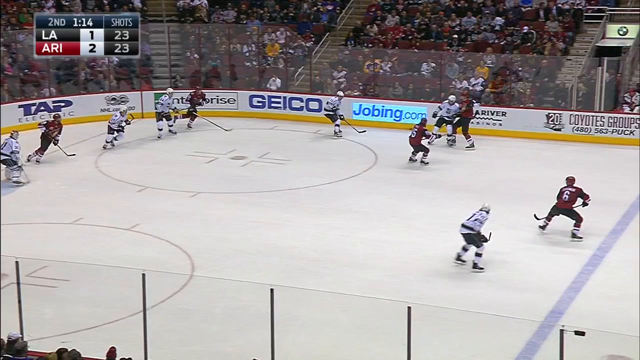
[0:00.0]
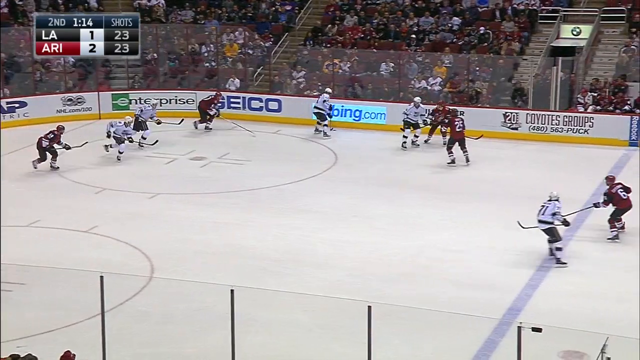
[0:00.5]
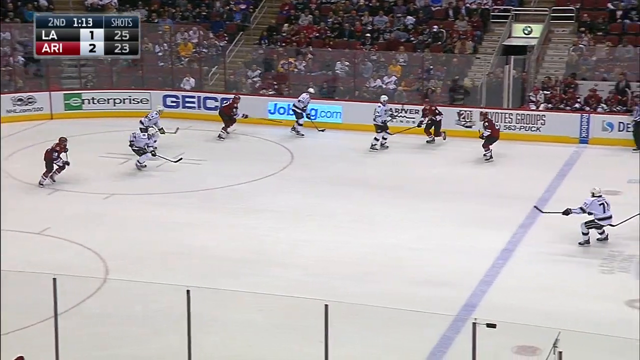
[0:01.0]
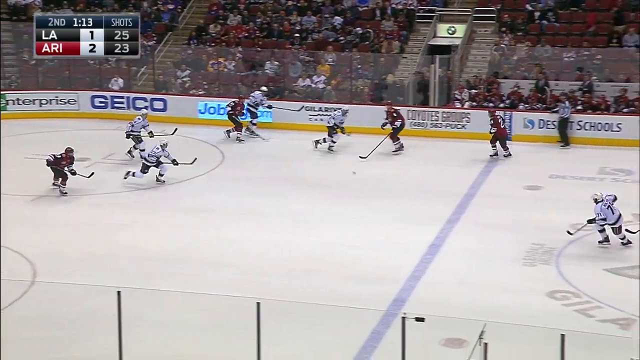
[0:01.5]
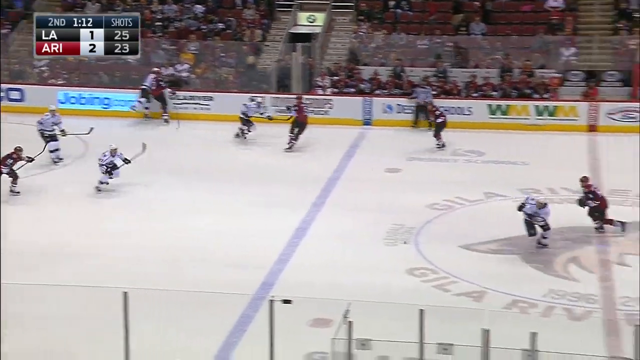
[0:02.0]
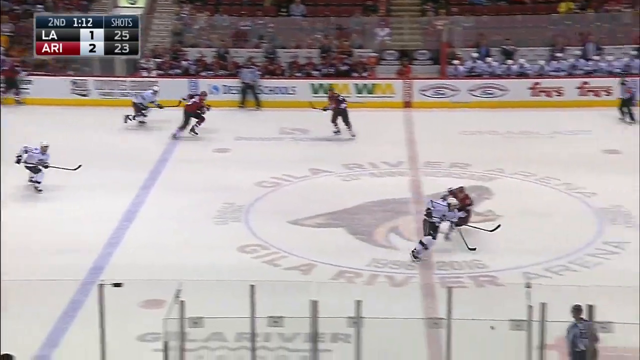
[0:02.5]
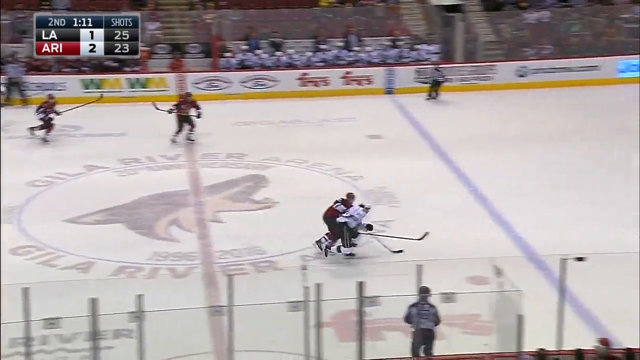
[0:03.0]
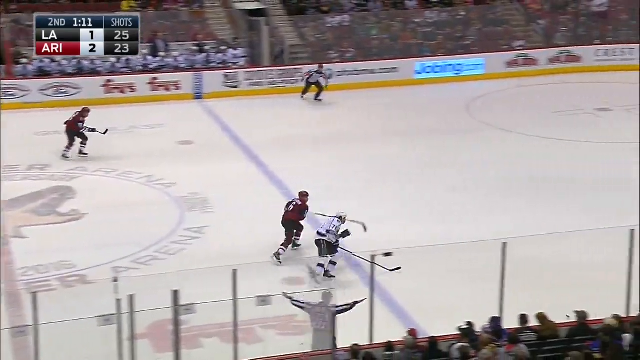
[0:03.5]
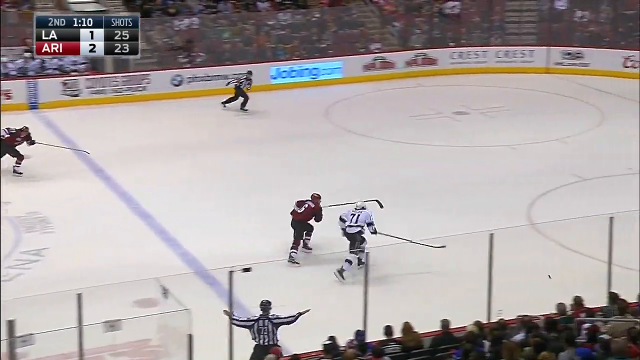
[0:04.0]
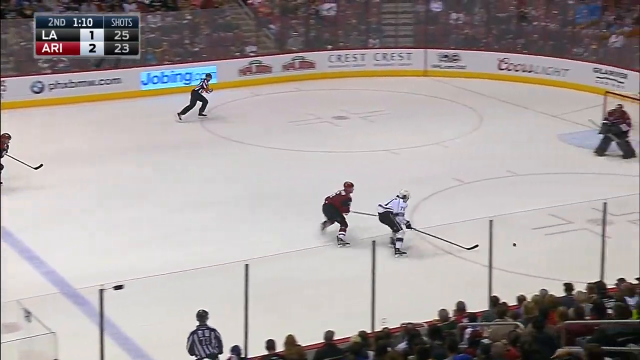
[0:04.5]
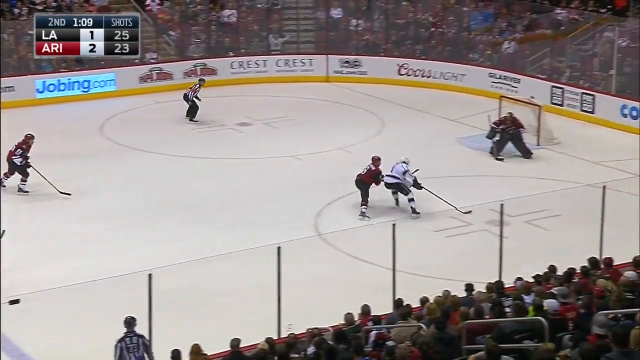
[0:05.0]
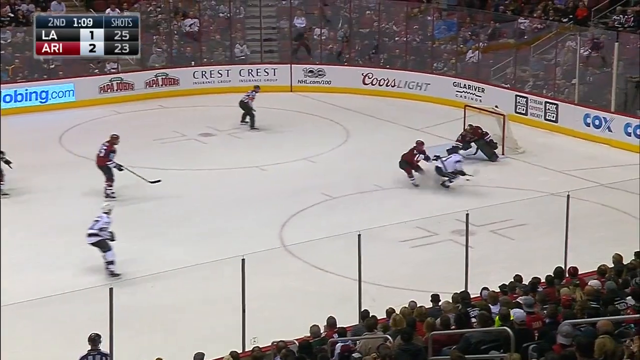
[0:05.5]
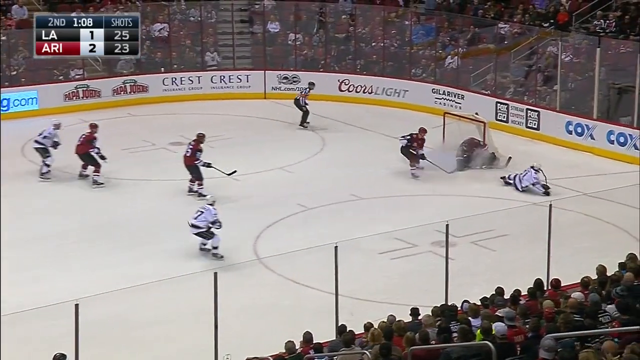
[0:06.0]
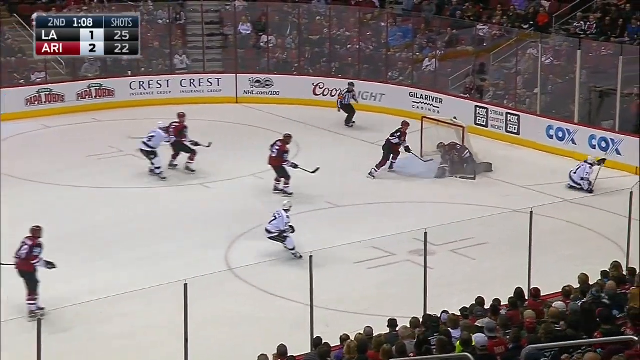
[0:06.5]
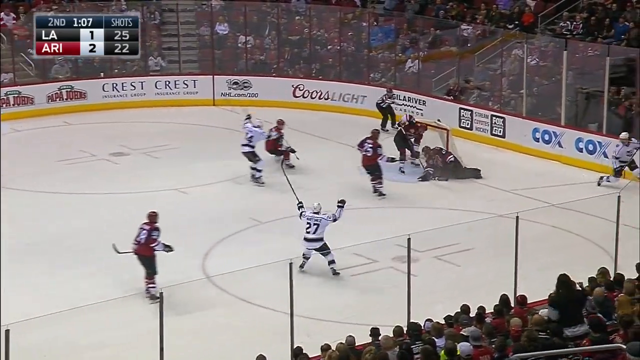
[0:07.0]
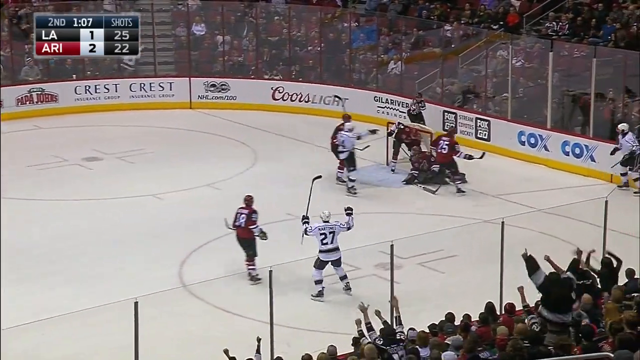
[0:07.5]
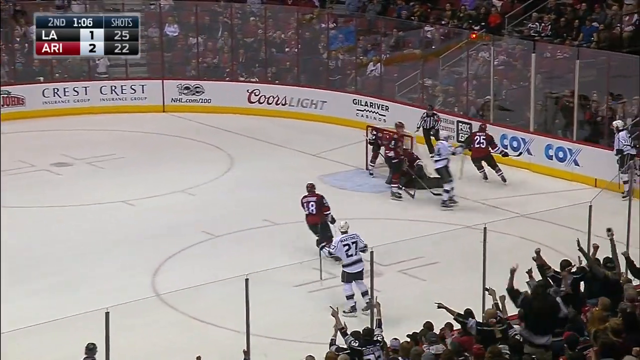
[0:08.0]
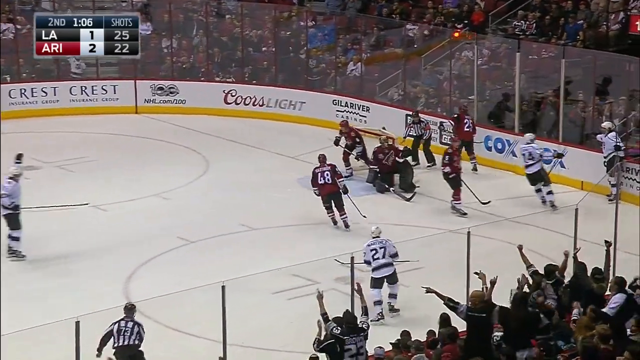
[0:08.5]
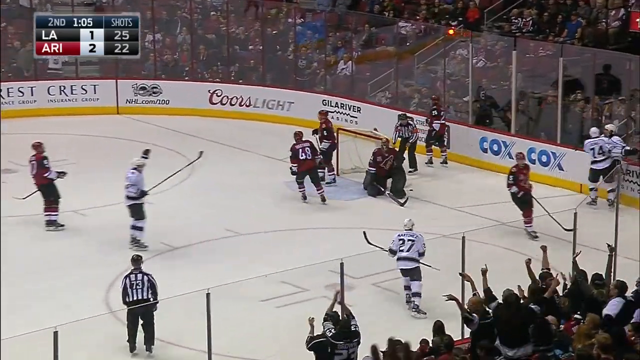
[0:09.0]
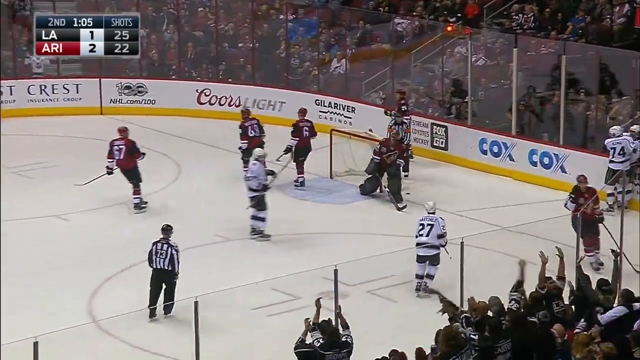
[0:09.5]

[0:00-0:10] Two teams face each other, one in red uniforms and the other in white. They seem to be fighting, ready to win, and there seems to be a goalkeeper on each side. A big crowd applauds and cheers them. The players are playing golf using skates and run very fast on them; both teams seem to be equally active. More than 10 people are visible, and the playing ground has different writings on it.